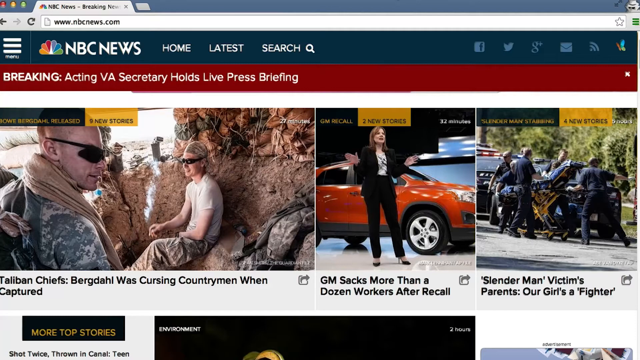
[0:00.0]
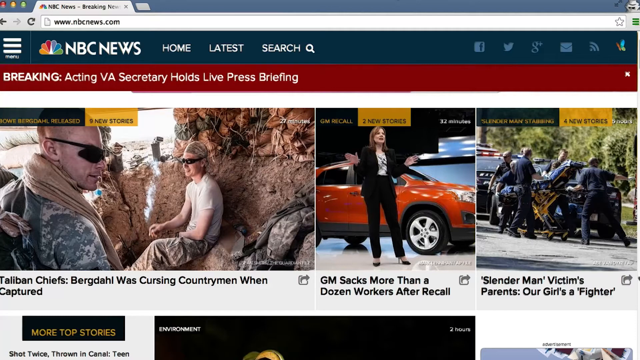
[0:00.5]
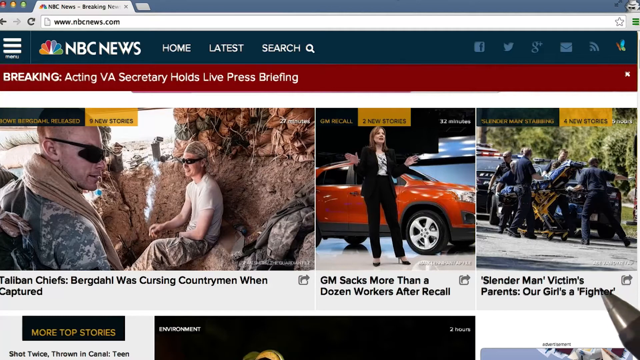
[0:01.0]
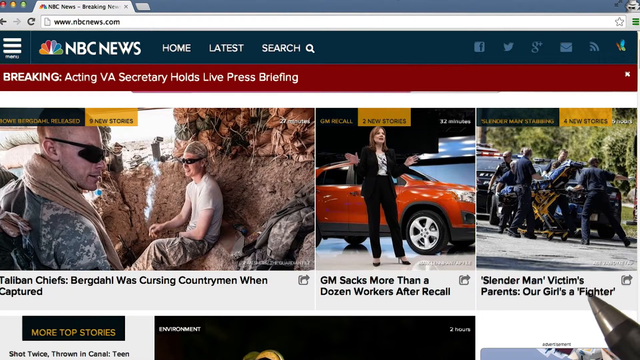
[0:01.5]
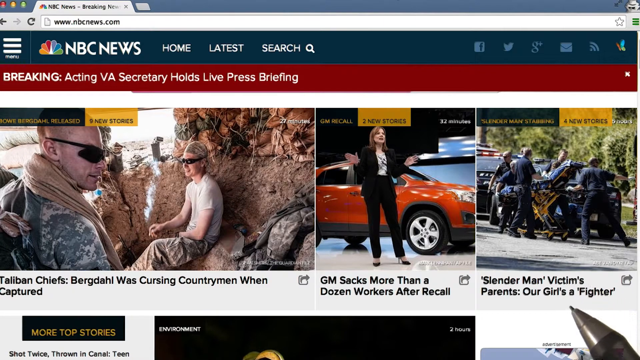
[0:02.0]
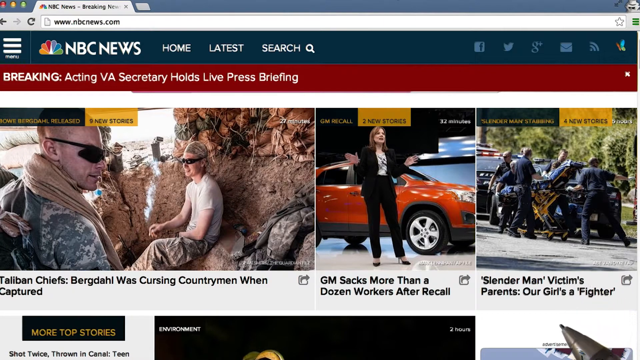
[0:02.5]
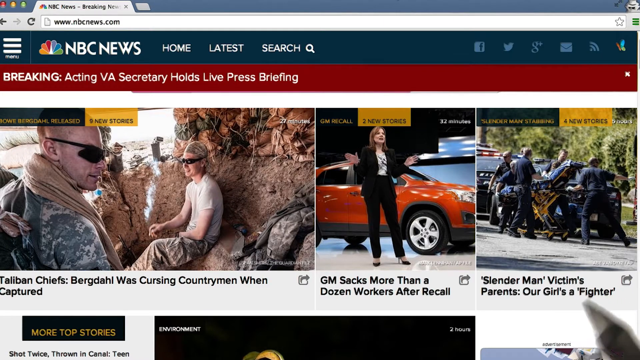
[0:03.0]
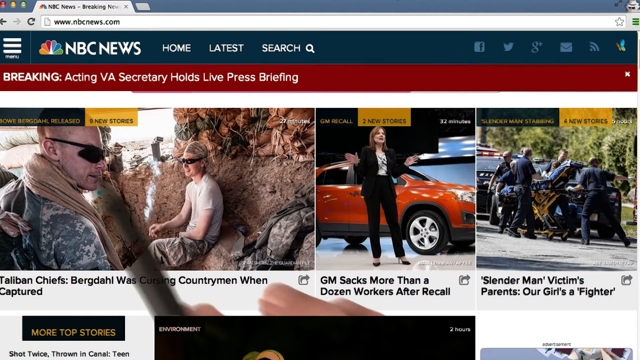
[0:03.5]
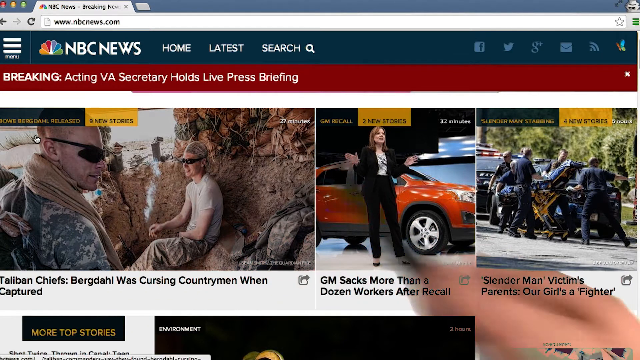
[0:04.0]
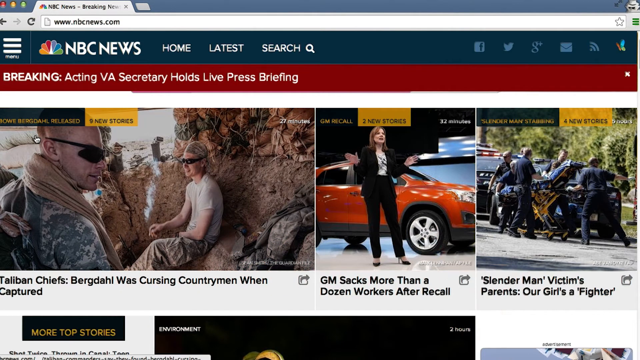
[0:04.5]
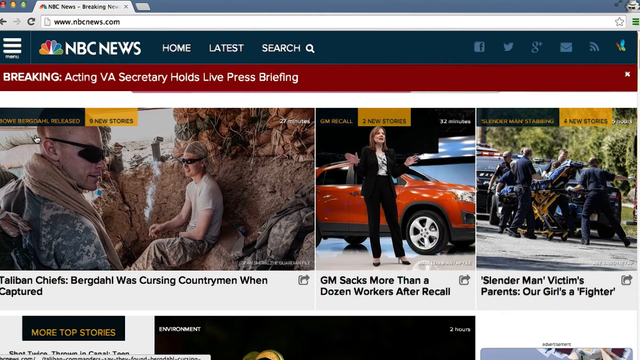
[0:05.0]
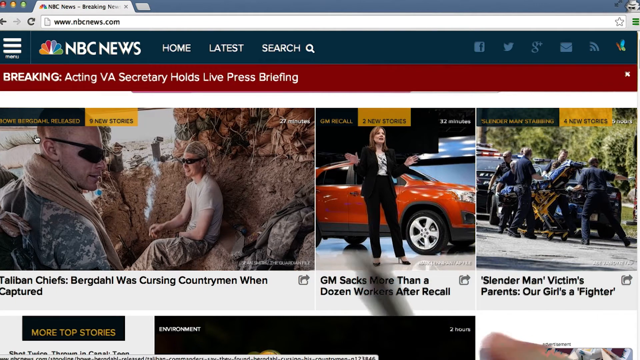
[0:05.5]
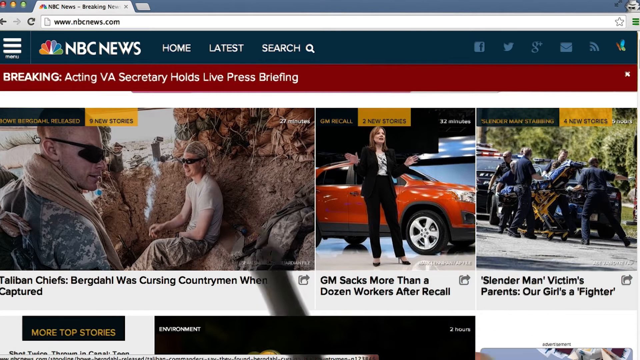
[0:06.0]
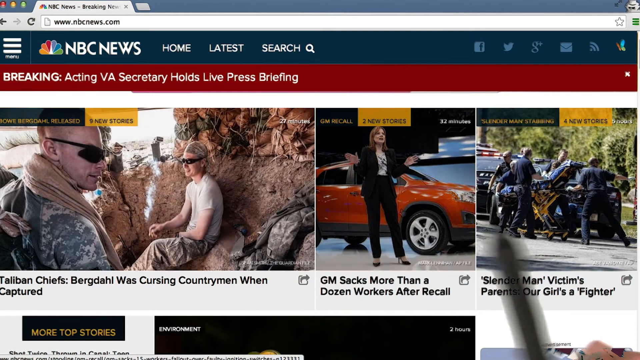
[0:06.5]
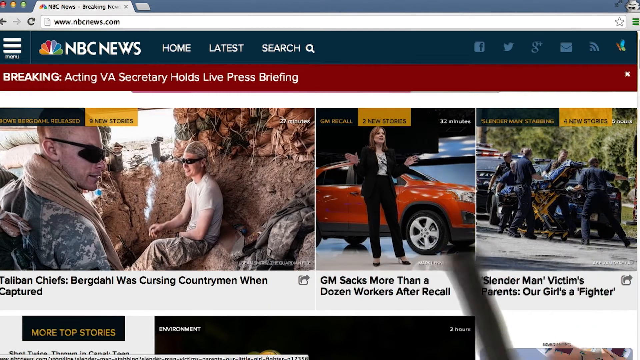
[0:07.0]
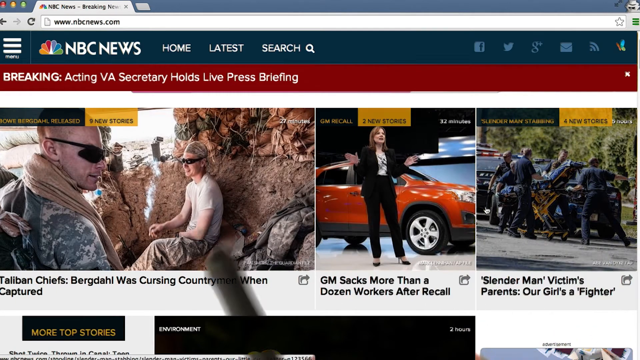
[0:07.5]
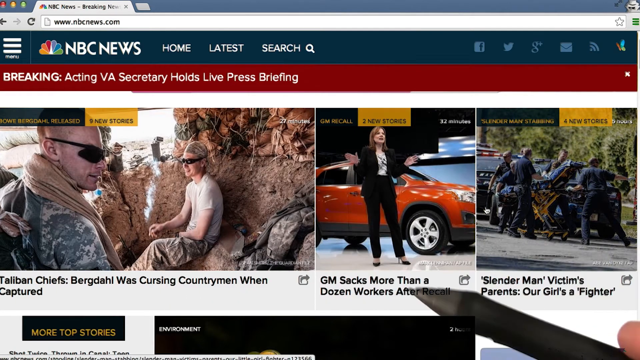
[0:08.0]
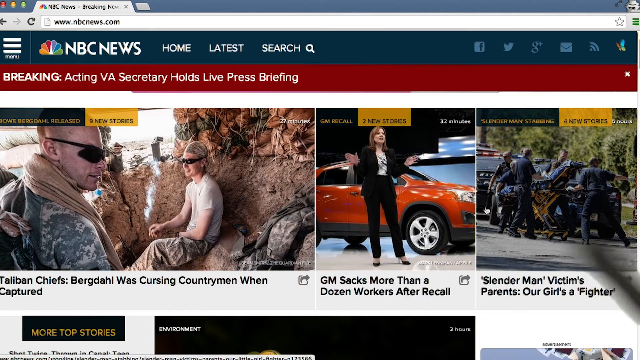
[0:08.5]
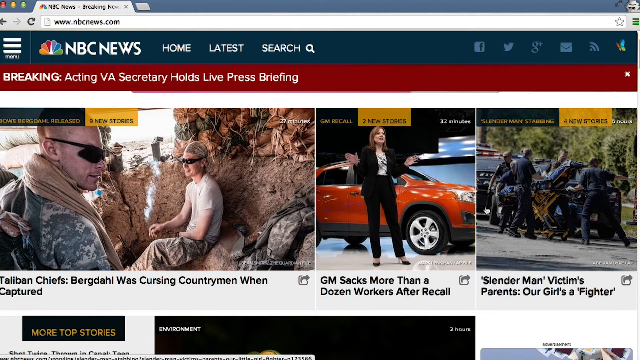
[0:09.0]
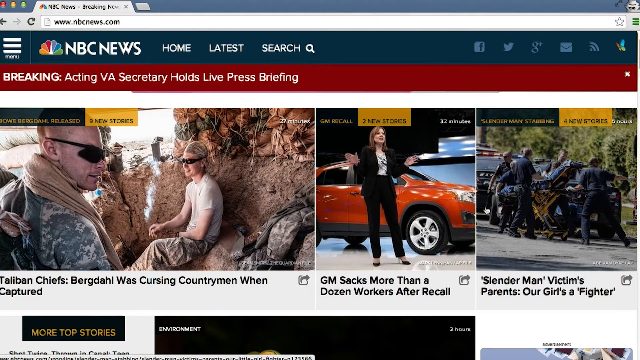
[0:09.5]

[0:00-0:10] An NBCnews.com page is open in a web browser, showing the NBC News home page. The story headlines include "Taliban chiefs, Bergdahi was cursing countrymen when he was captured," "GM sacks more than a dozen workers after recall," and one beginning "slender man victims parents." In the picture, Bergdahi is smoking a cigarette. A pen appears in the lower right-hand corner, under the slender man story, and circles the third story's title. It then moves up to the top and goes from left to right along it, pointing at each of the three stories separately, first forward and then backward from right to left.